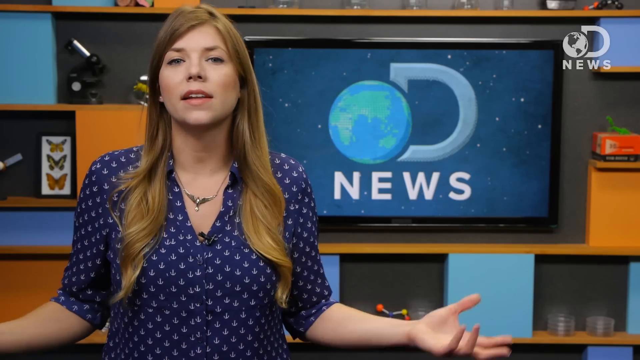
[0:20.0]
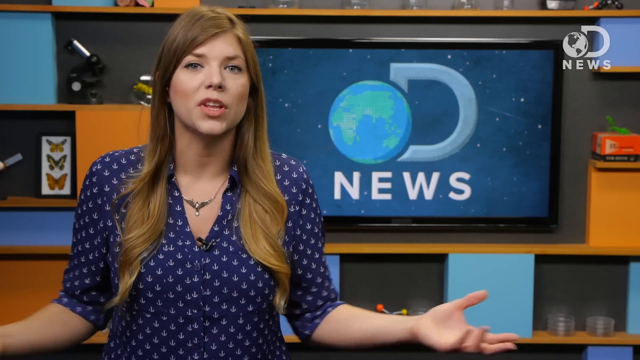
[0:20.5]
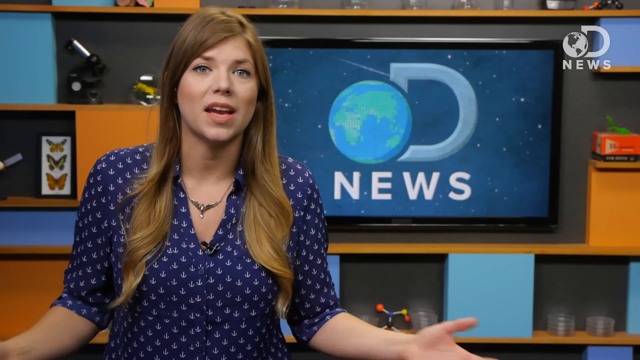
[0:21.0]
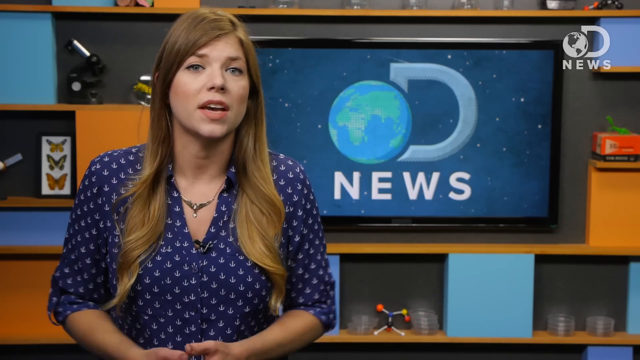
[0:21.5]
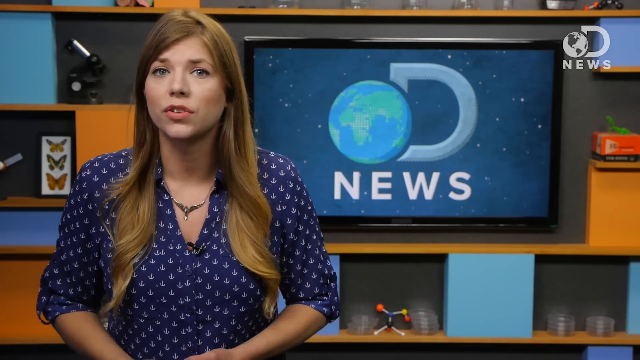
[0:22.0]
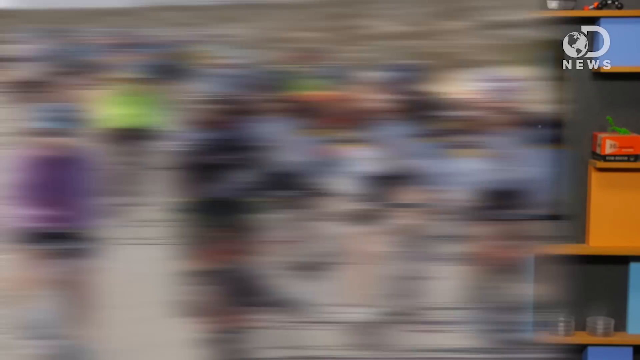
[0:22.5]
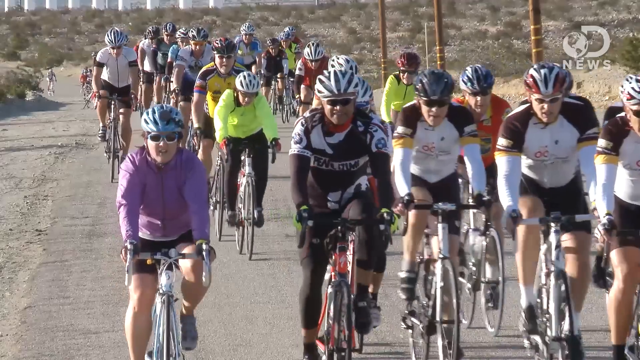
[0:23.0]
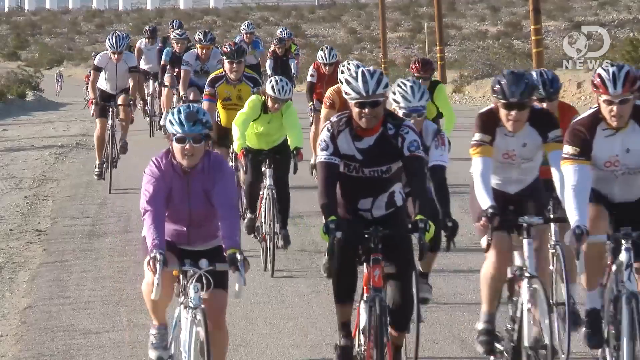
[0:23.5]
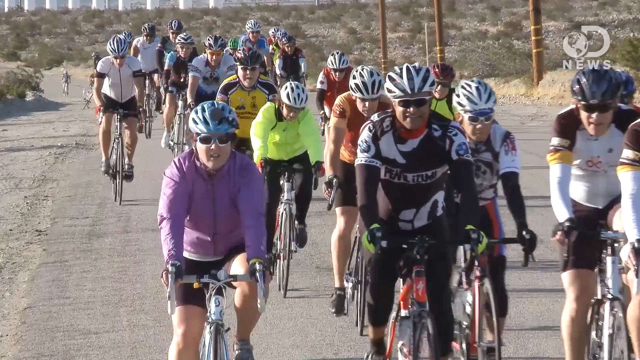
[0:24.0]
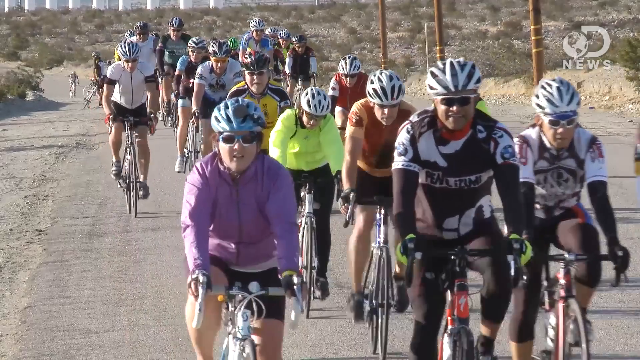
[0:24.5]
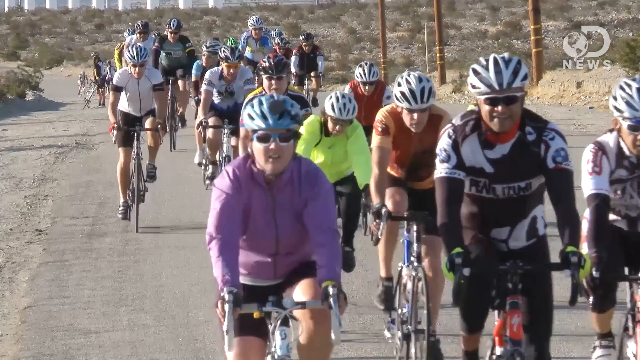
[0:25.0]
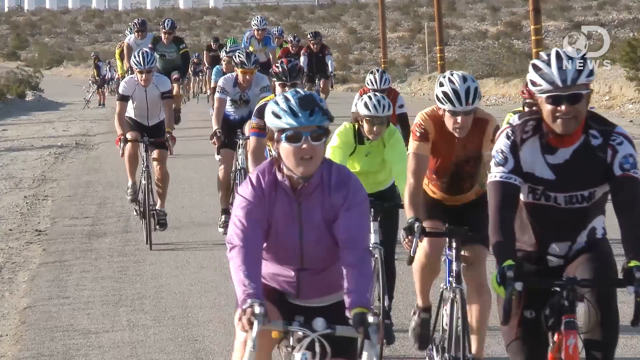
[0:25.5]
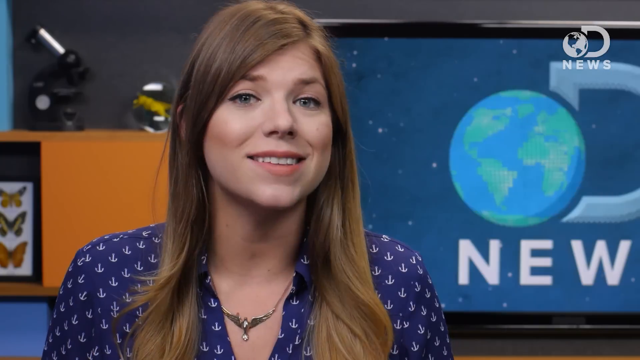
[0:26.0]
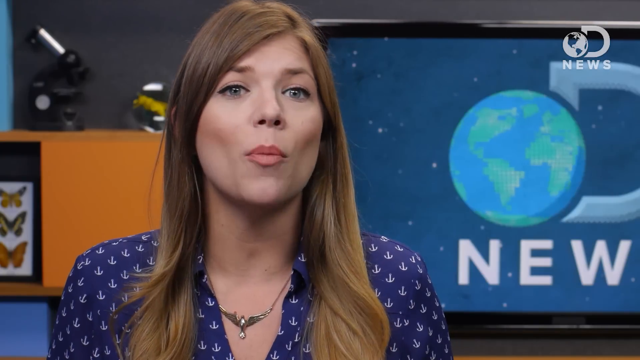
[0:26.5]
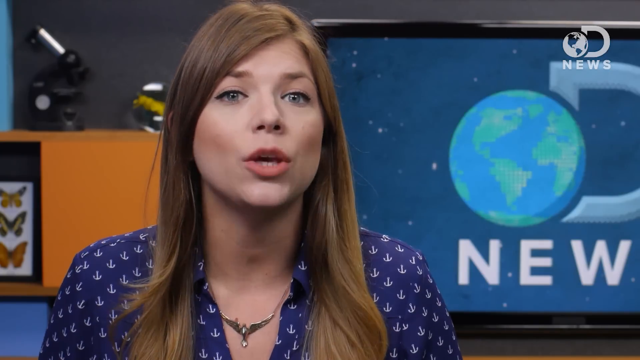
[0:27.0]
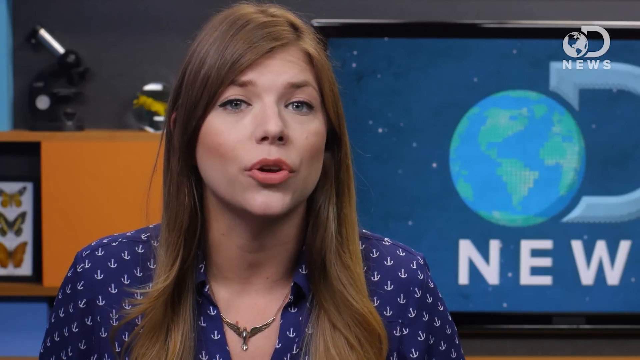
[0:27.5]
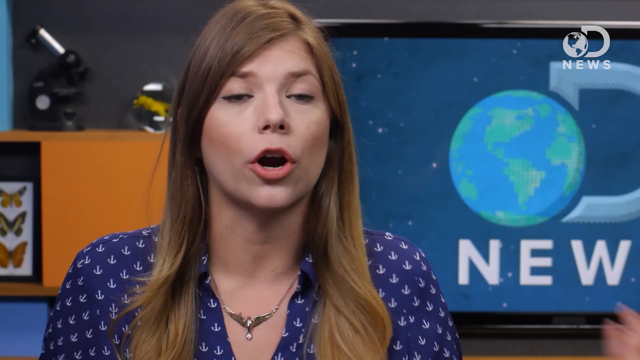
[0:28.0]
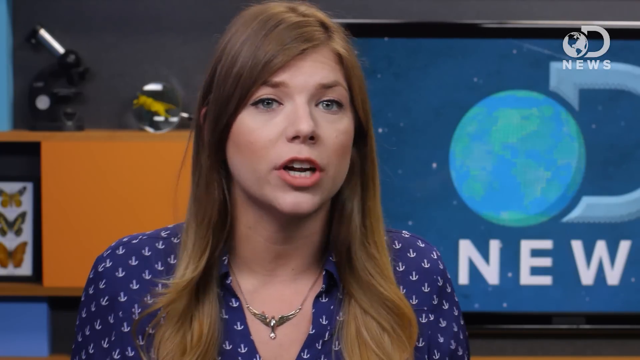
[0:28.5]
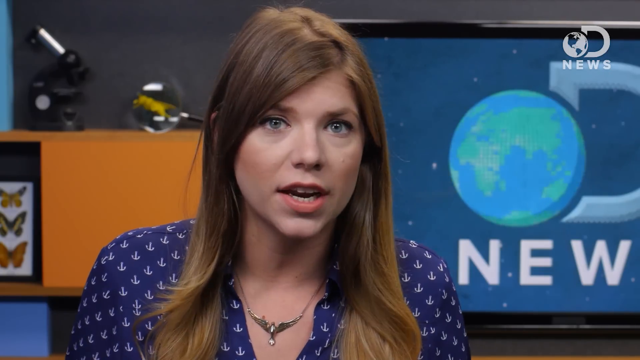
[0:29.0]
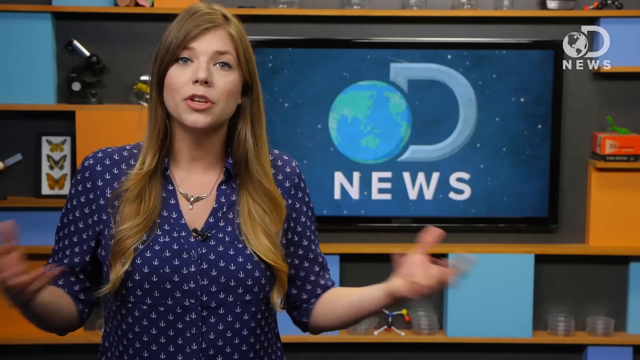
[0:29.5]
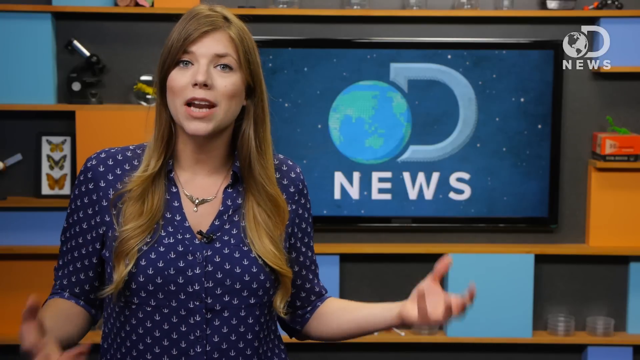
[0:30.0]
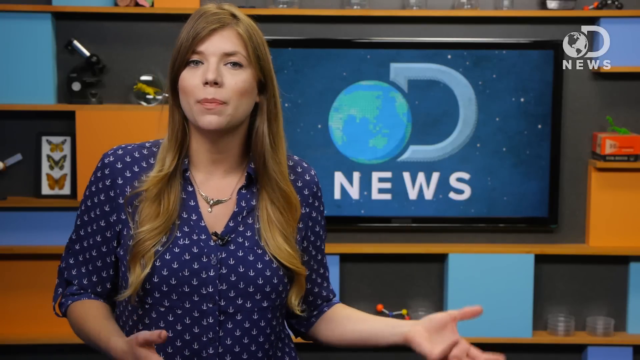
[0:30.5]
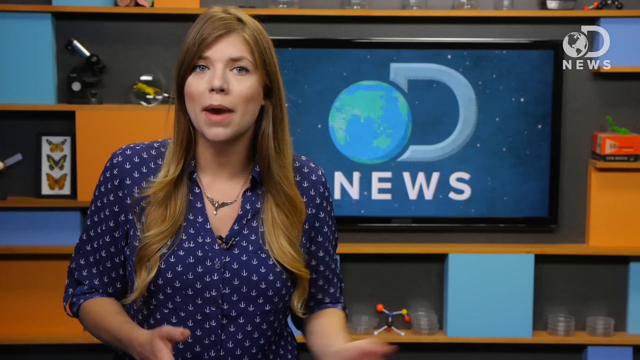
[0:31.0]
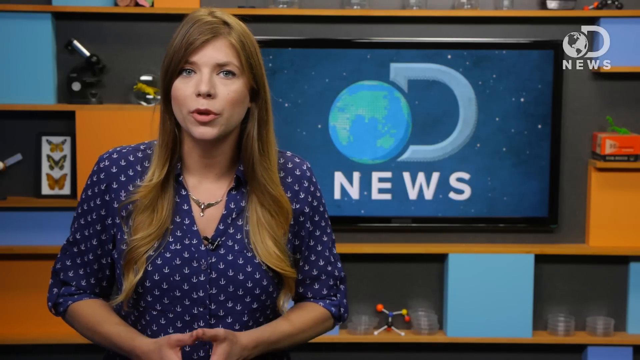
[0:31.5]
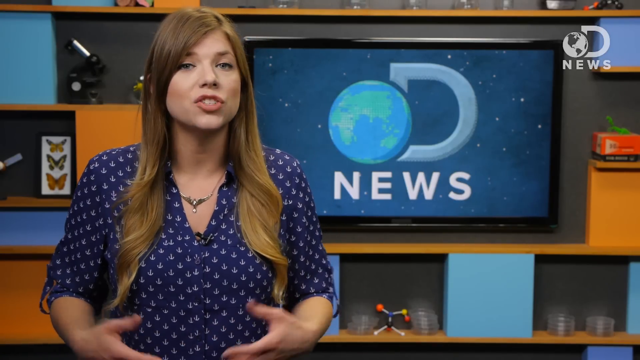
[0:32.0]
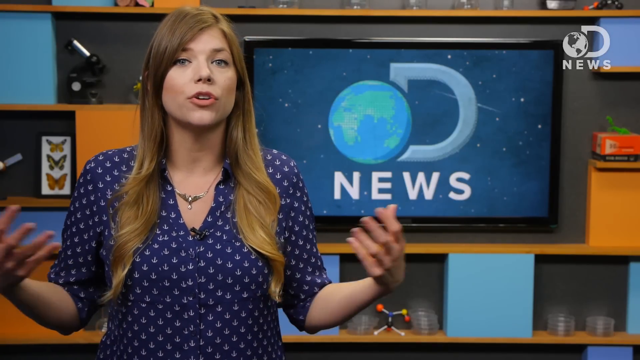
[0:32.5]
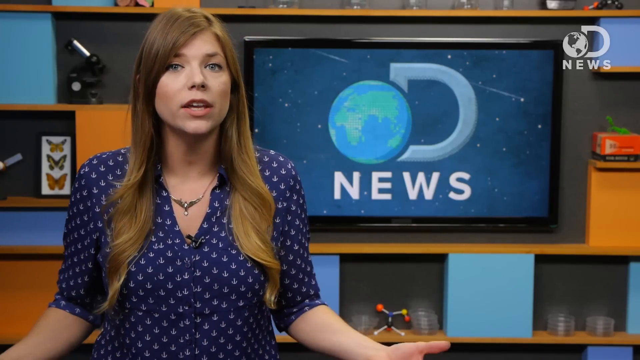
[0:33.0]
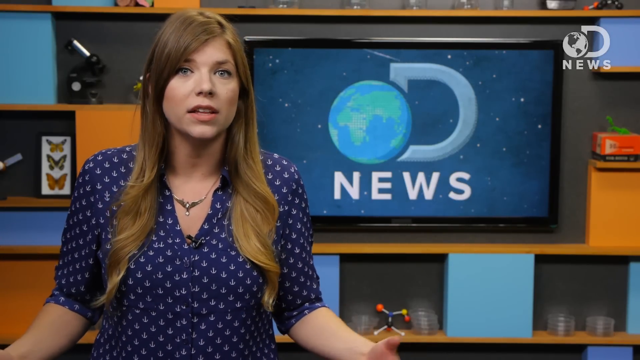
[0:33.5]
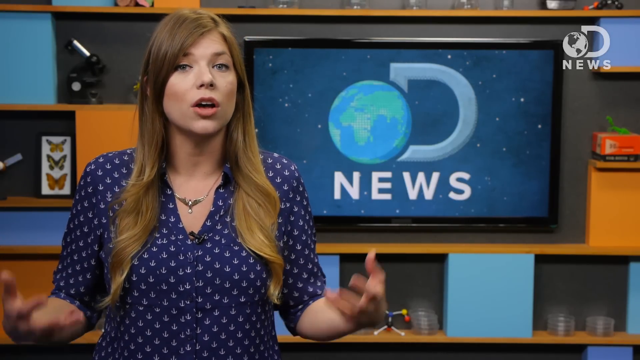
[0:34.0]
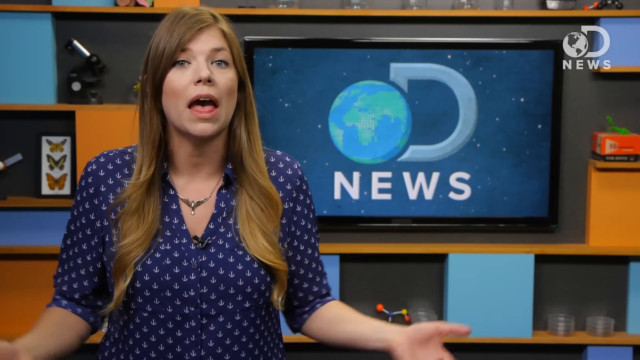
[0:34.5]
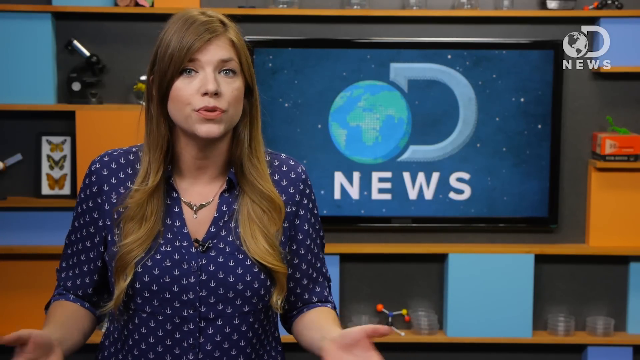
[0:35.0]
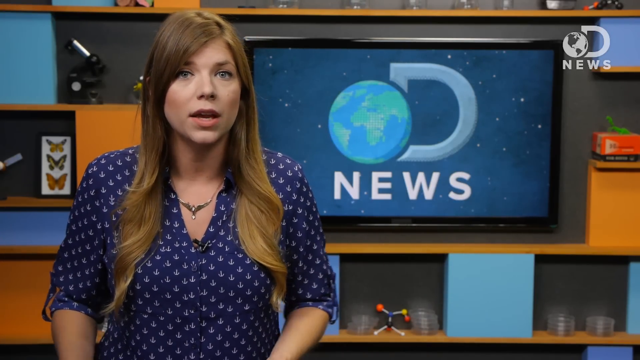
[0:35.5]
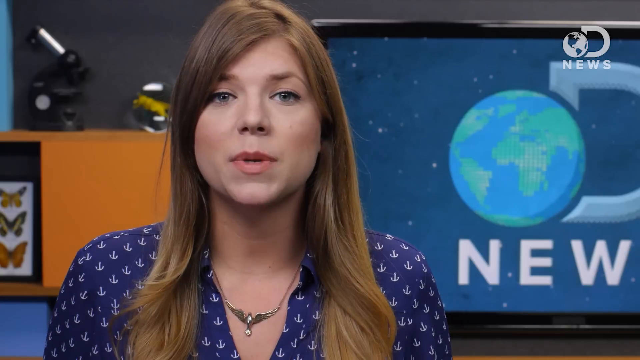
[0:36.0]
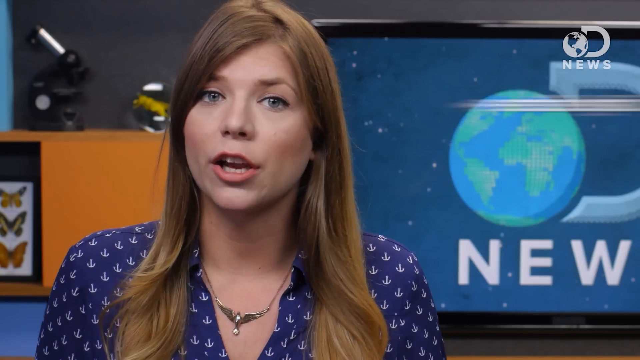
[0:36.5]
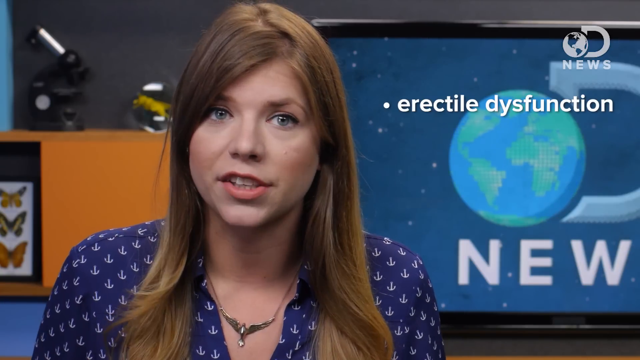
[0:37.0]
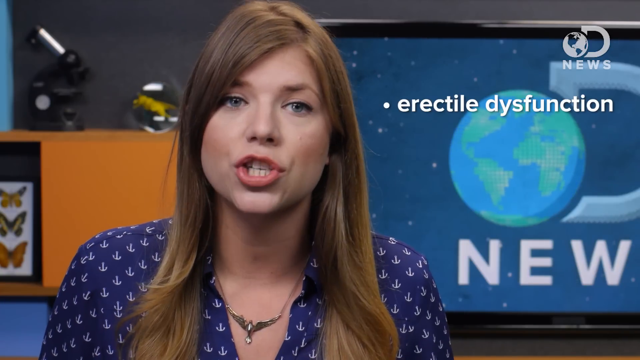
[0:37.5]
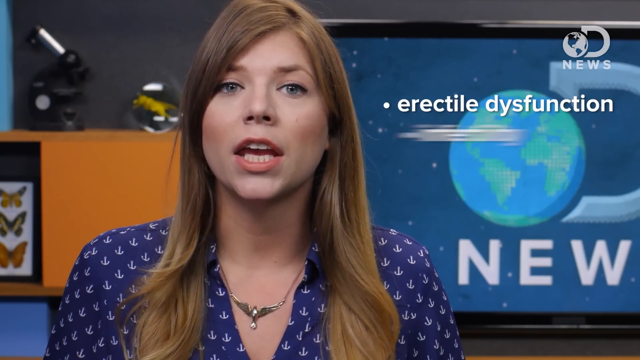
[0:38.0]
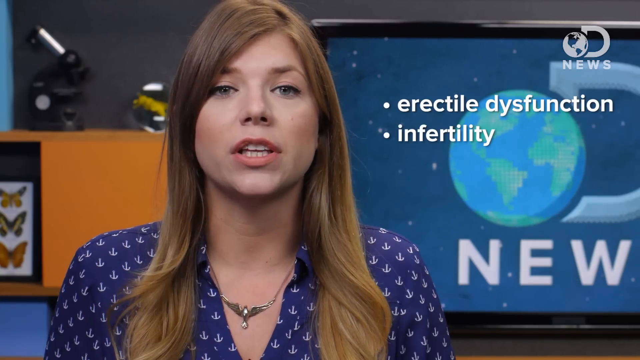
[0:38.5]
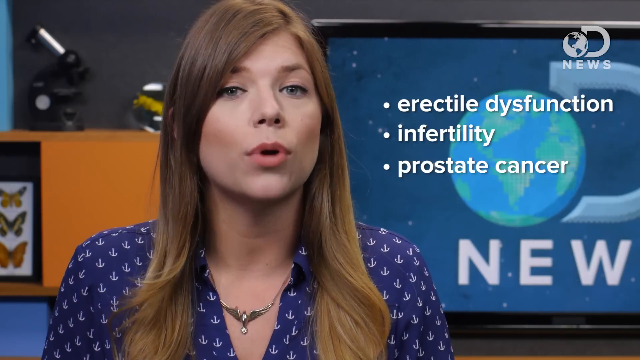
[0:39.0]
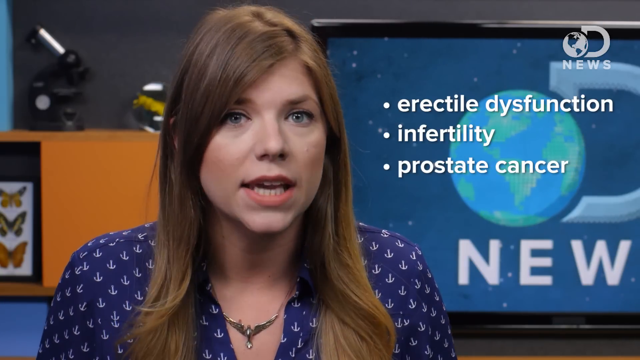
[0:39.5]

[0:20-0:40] A monitor with black linings shows the Discovery News icon: the Earth, a big "D" and the text "news". Footage shows a background of shrubbery, dry grass, dry plants, a lot of dirt and poles, with many people riding bicycles, all in different colours, all wearing outfits and helmets. A woman with long hair talks back in her studio, something appearing blue, moving and waving her hands a lot and making many expressions. Text reads "erectile dysfunction, infertility, prostate cancer". It apparently is a news program about the Tour de France and how it can affect people because they sit on seats.